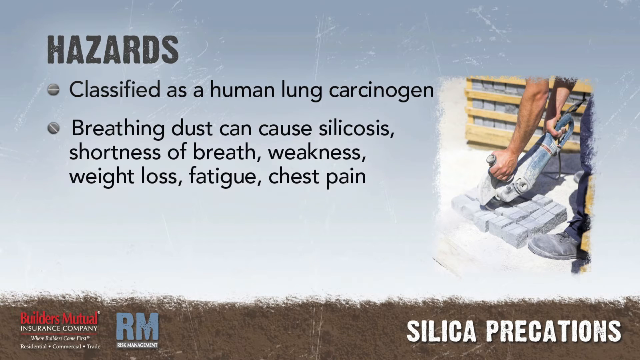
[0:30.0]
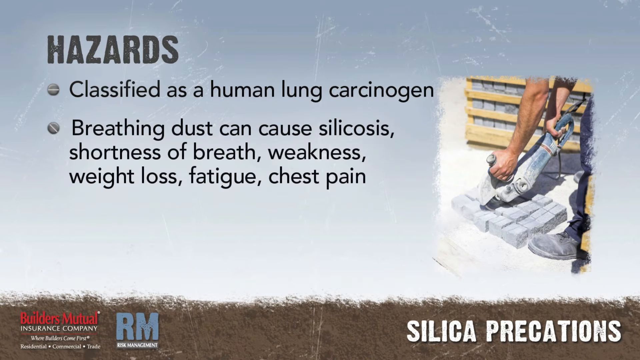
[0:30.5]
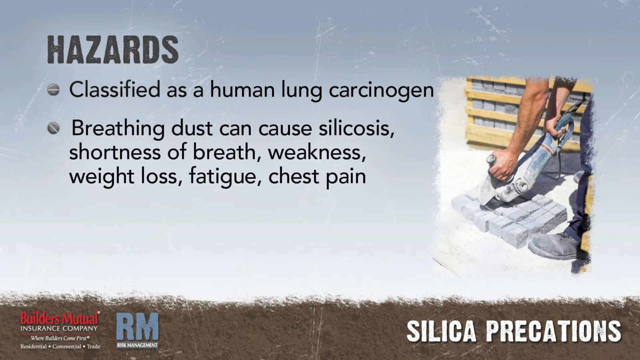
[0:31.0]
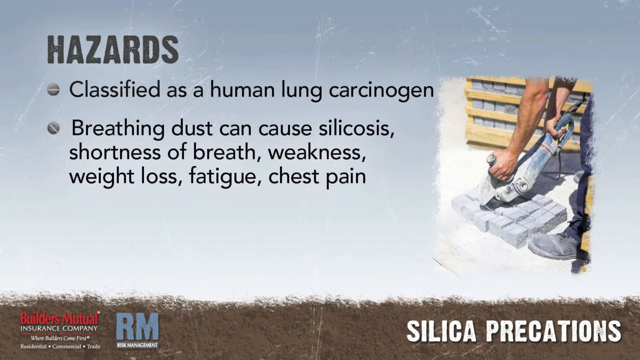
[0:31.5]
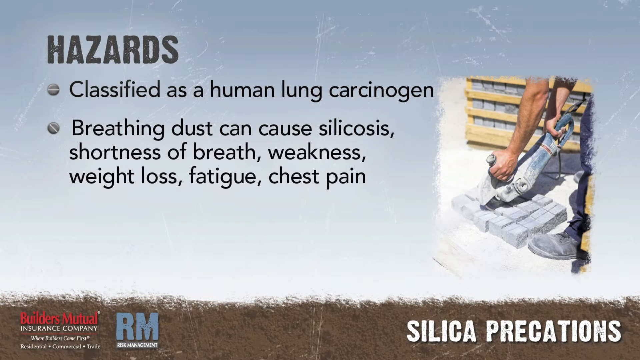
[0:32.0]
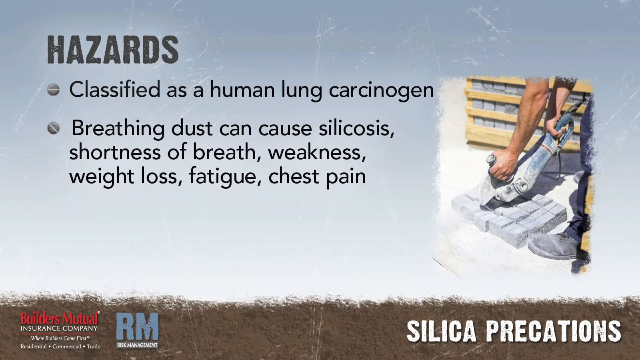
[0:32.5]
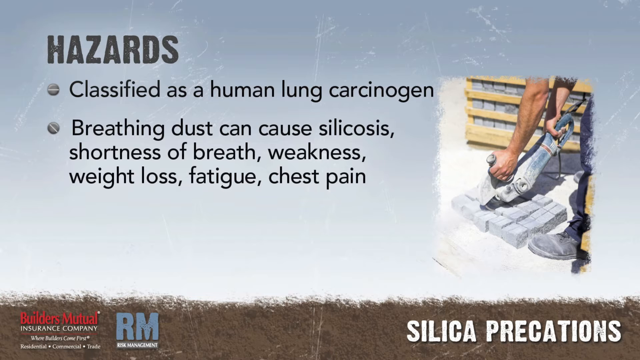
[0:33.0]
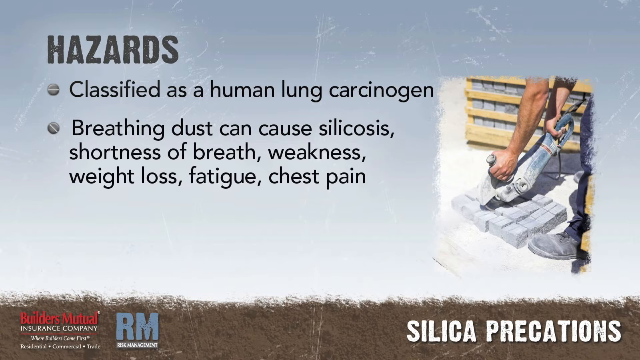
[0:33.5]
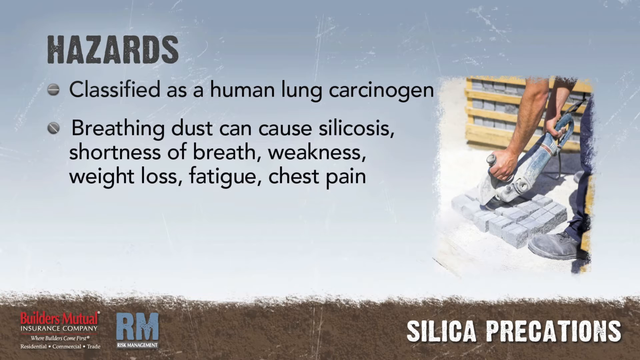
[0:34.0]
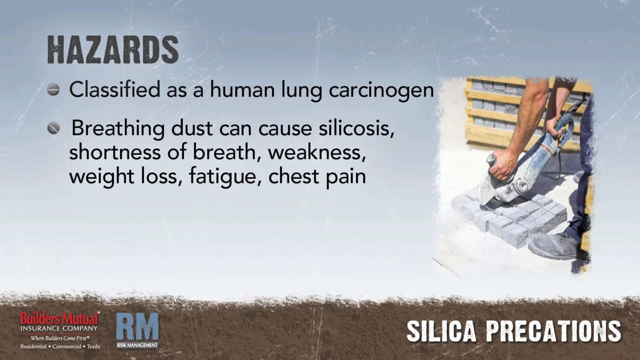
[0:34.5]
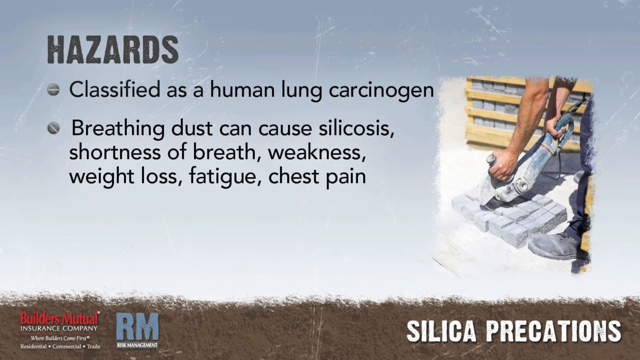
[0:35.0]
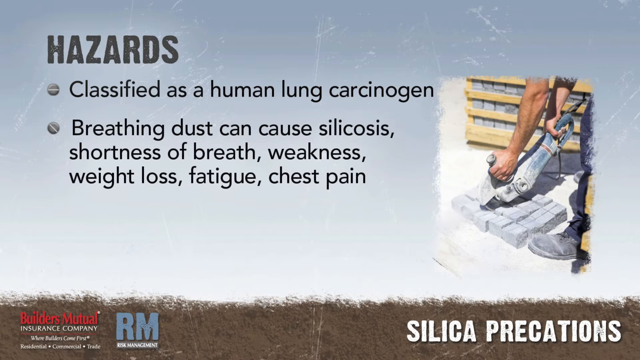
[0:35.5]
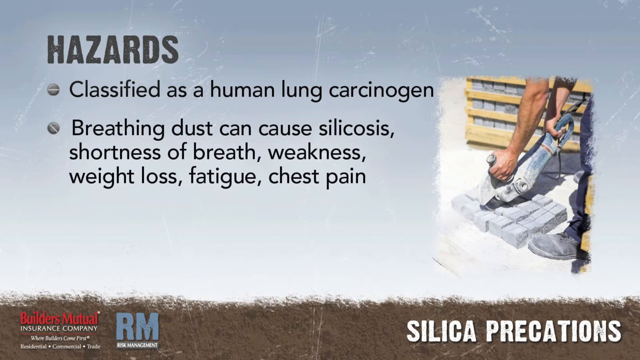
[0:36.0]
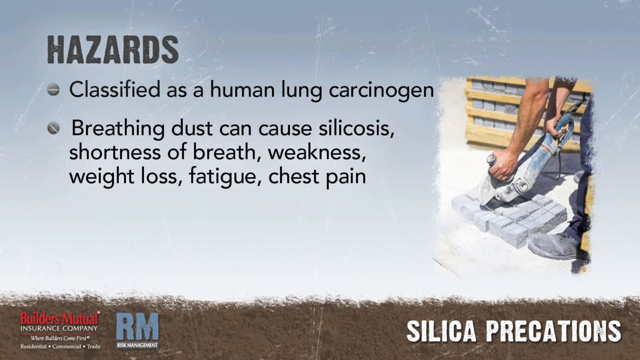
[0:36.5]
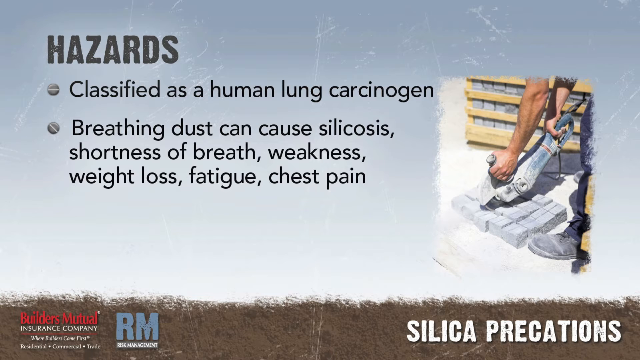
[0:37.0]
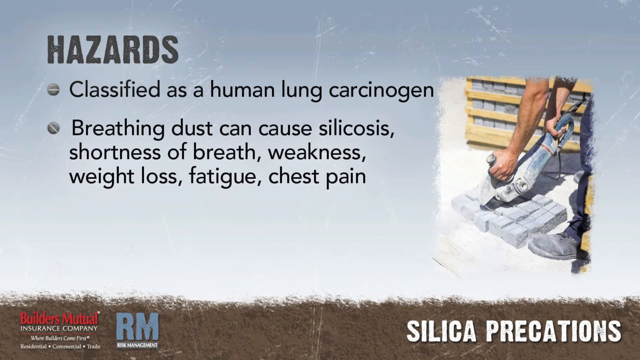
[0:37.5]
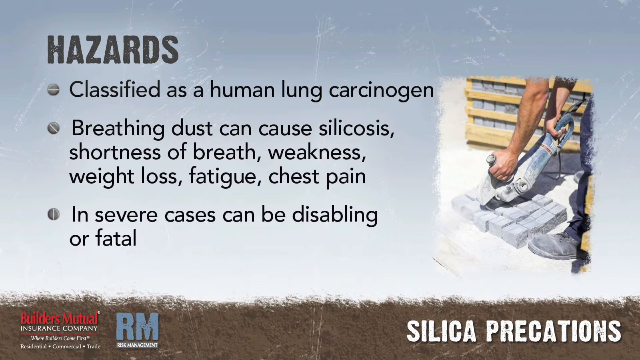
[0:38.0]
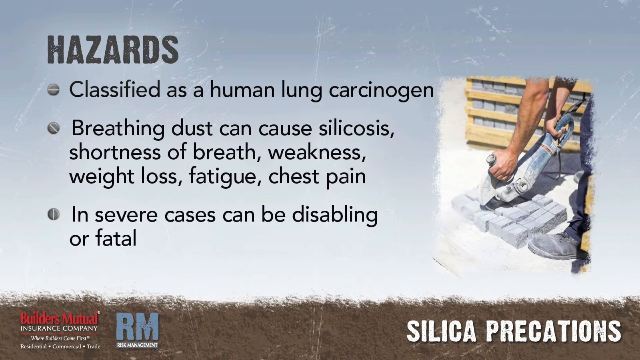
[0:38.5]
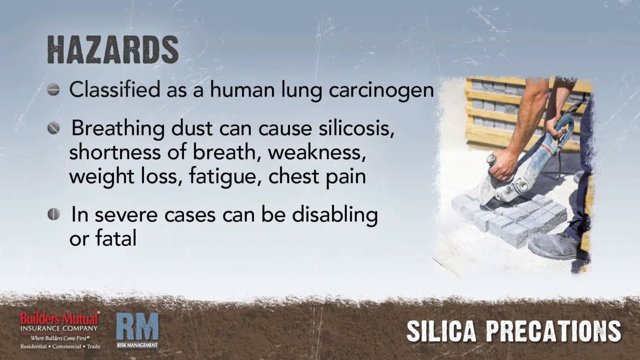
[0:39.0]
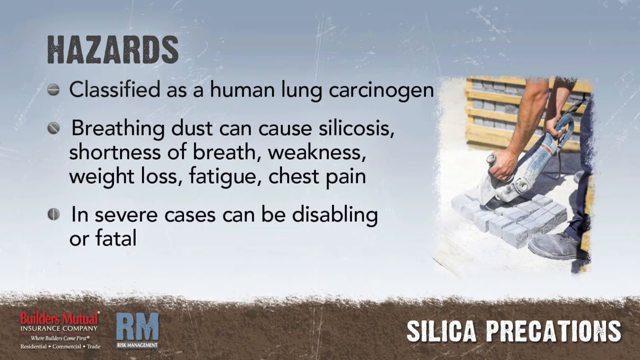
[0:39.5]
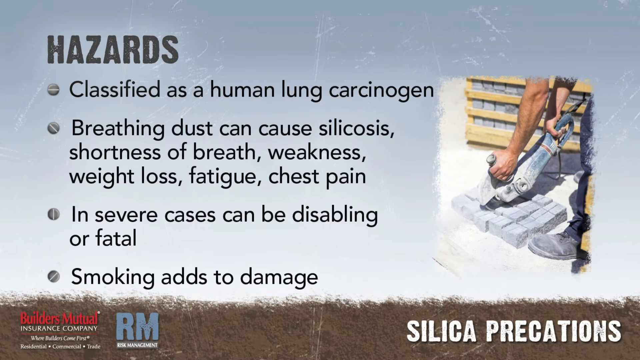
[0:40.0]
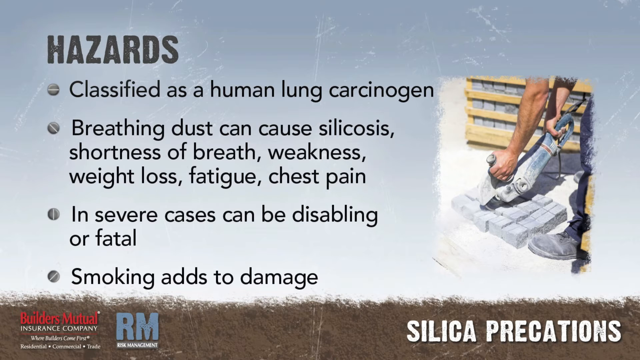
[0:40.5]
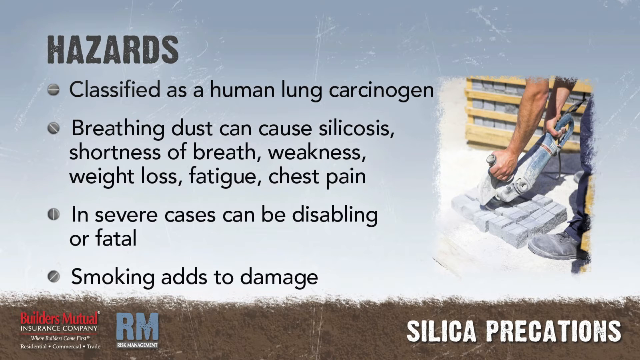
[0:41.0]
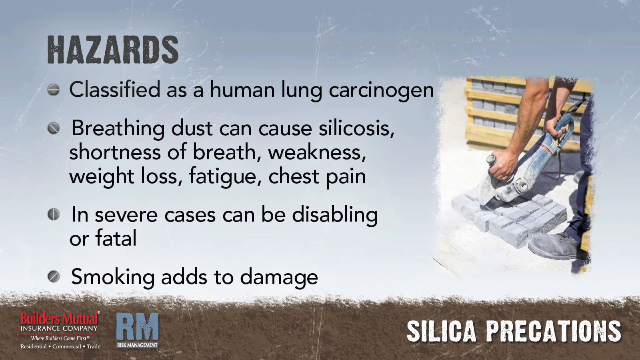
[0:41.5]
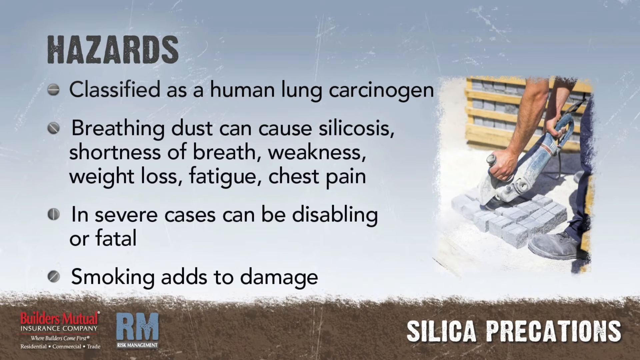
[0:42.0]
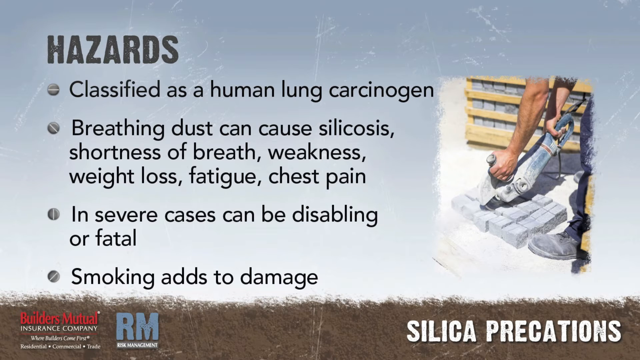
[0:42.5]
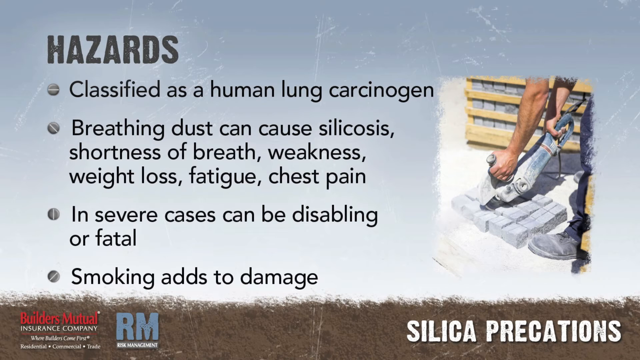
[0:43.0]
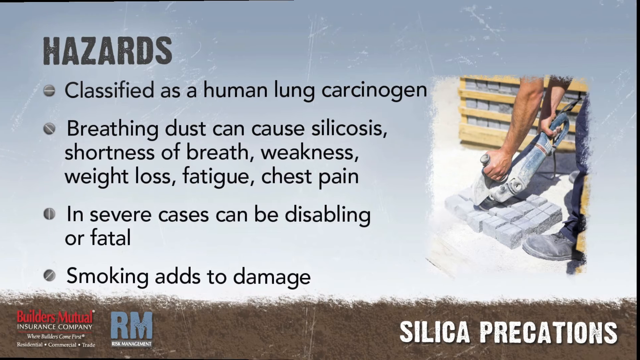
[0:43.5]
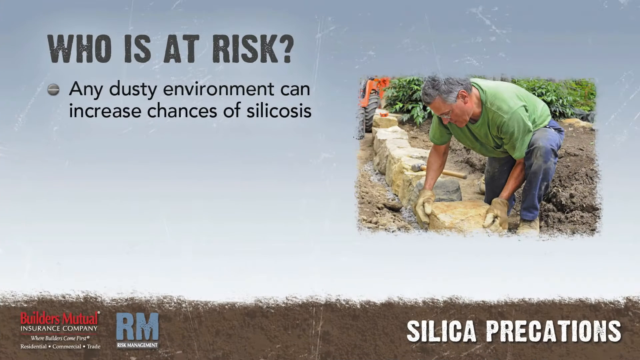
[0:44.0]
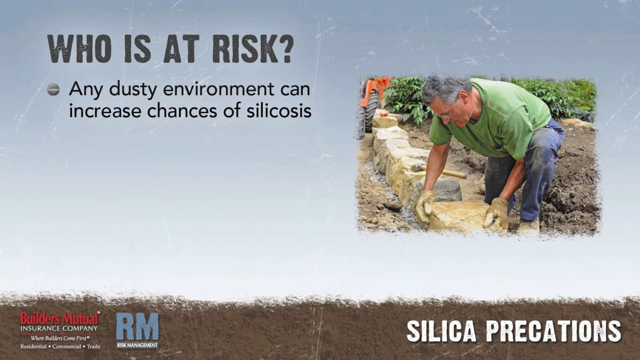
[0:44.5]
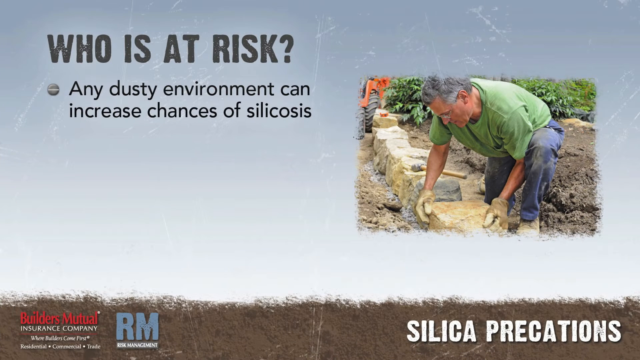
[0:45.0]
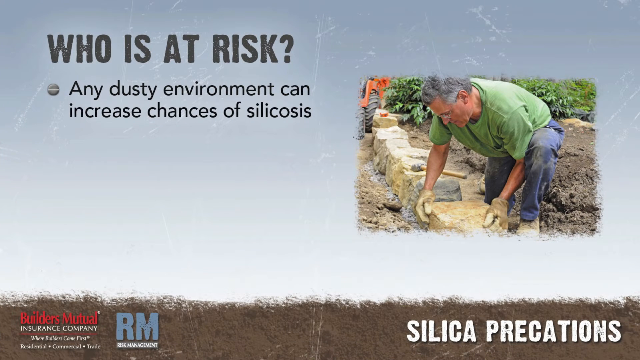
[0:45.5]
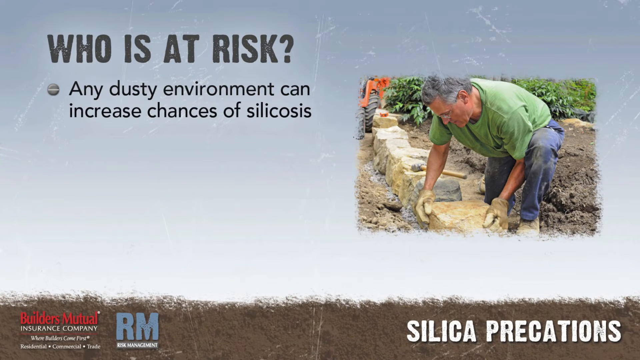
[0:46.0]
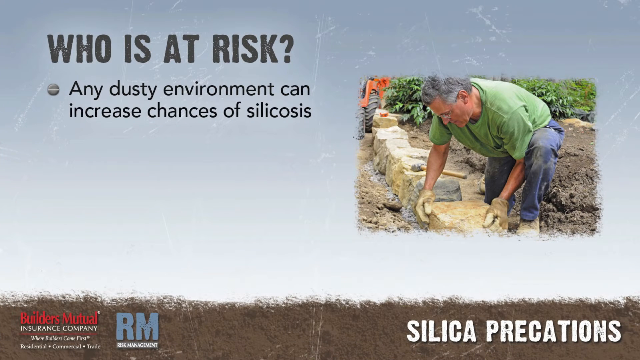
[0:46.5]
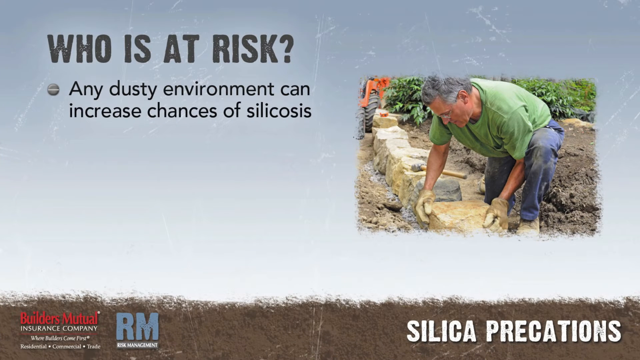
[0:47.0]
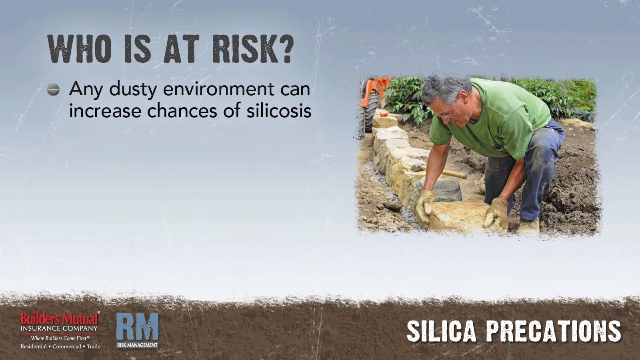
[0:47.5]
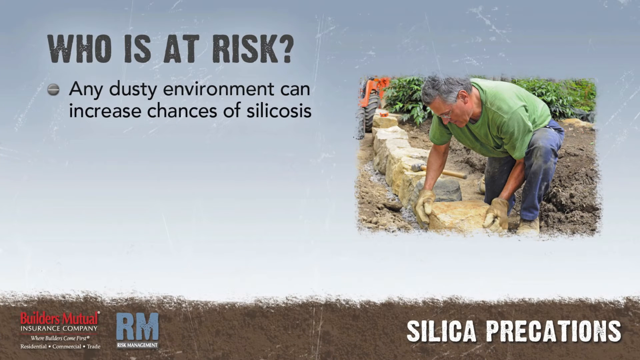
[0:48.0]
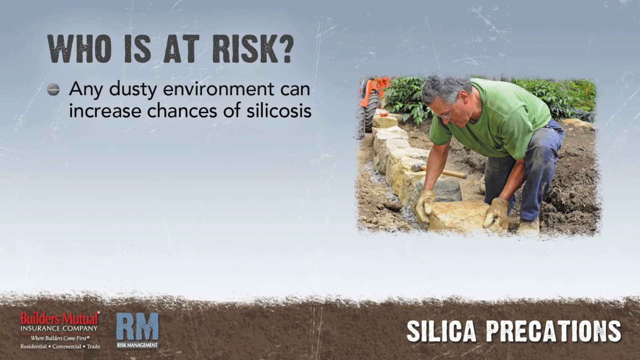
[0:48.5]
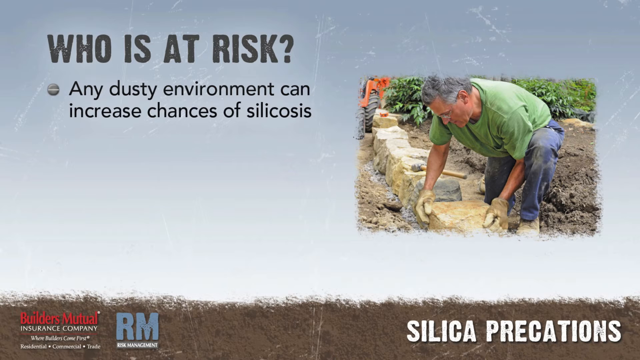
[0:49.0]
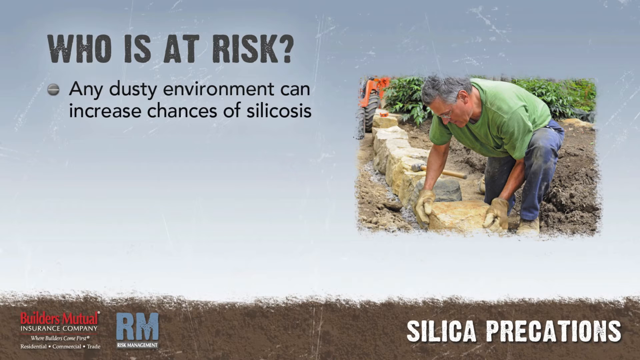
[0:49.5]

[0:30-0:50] A second bullet point appears below the first: "Breathing dust can cause silicosis, shortness of breath, weakness, weight loss, fatigue, chest pain." A third bullet point appears below it: "In severe cases, can be disabling or fatal." The fourth and last bullet point appears at the bottom: "Smoking adds to damage." On the right side of the page, a person bends over and uses some sort of portable electric hardware device with their hands; it looks like a saw, and underneath it are what look like light gray bricks of concrete. The scene changes to another slide with the headline "Who is at risk?" in the top left corner, and the first bullet point on the upper left reads "Any dusty environment can increase chances of silicosis."